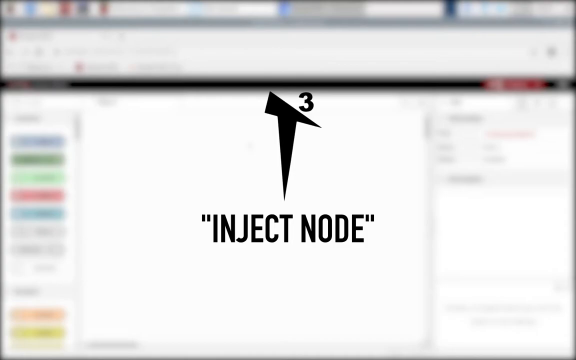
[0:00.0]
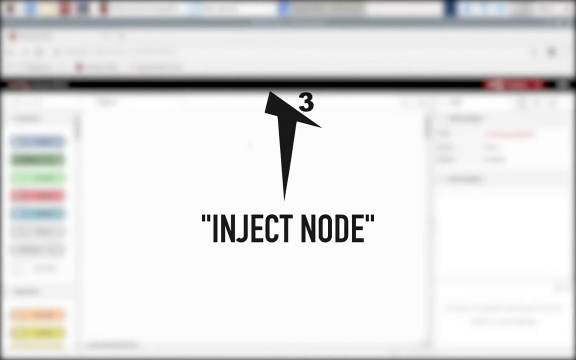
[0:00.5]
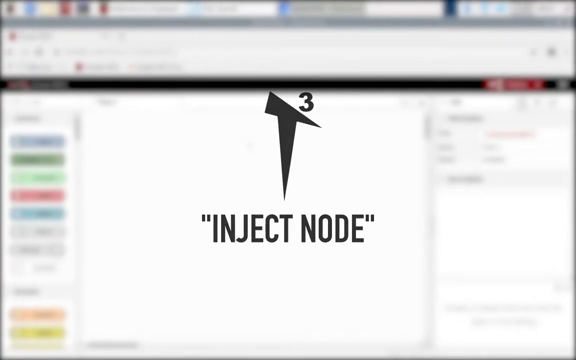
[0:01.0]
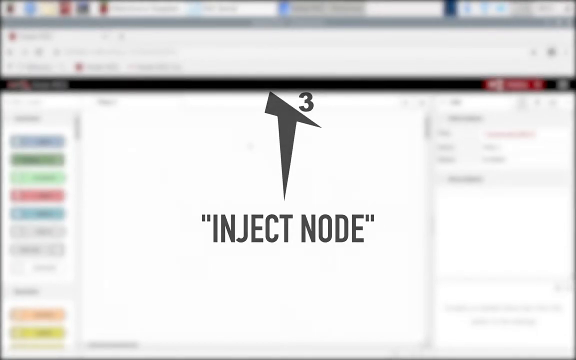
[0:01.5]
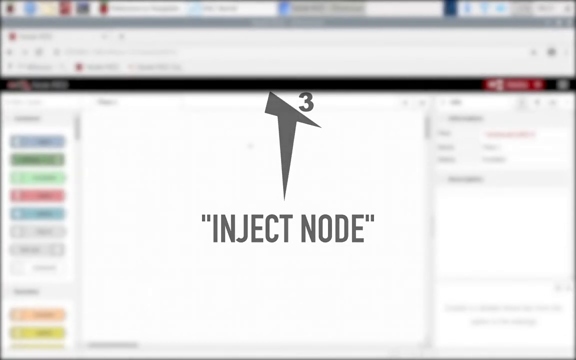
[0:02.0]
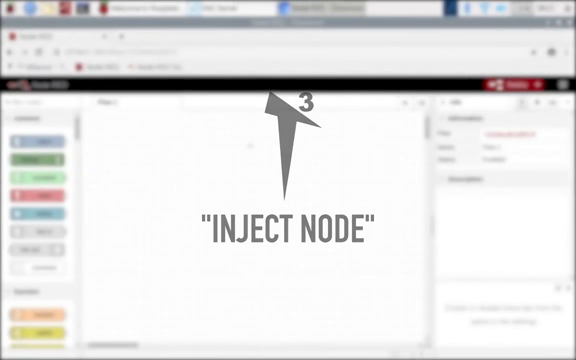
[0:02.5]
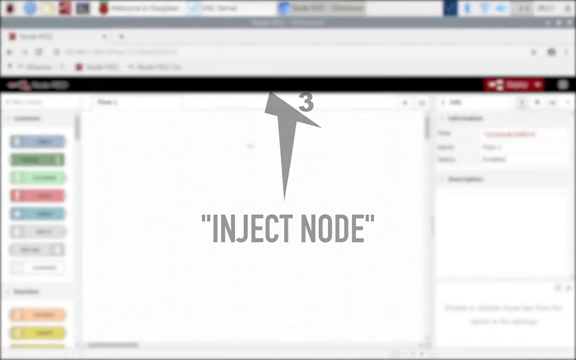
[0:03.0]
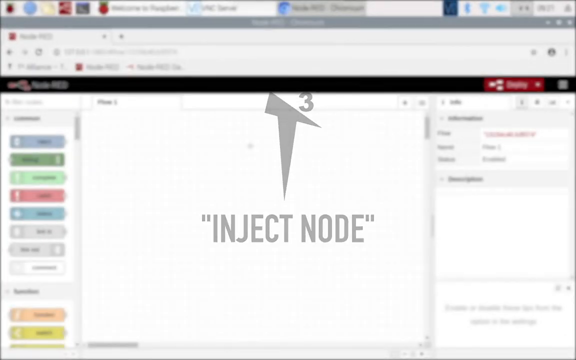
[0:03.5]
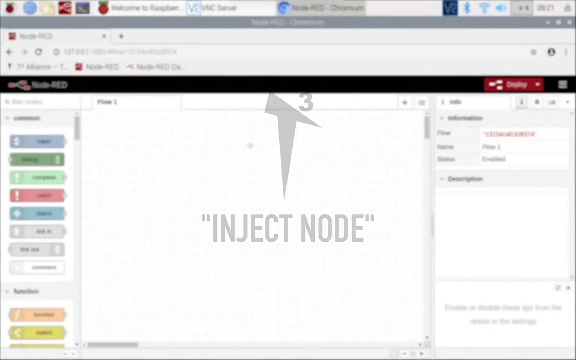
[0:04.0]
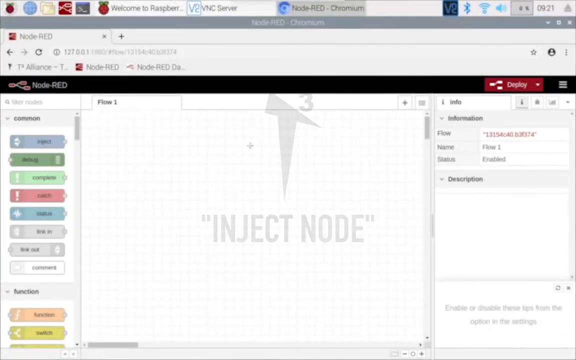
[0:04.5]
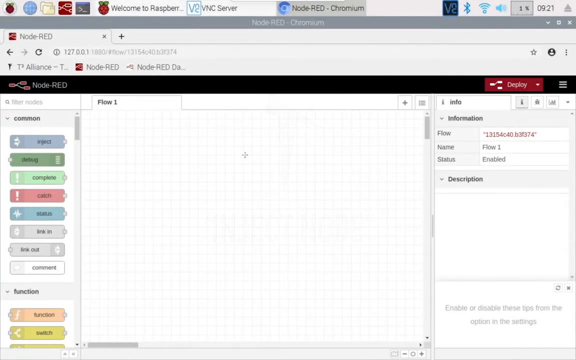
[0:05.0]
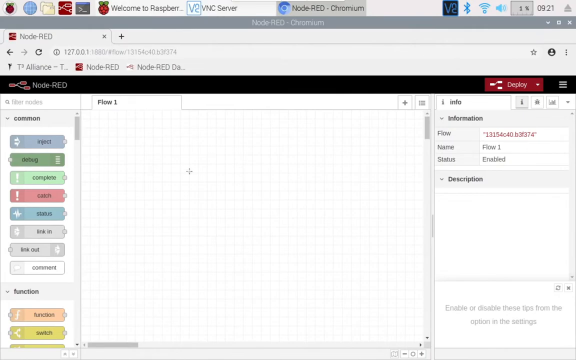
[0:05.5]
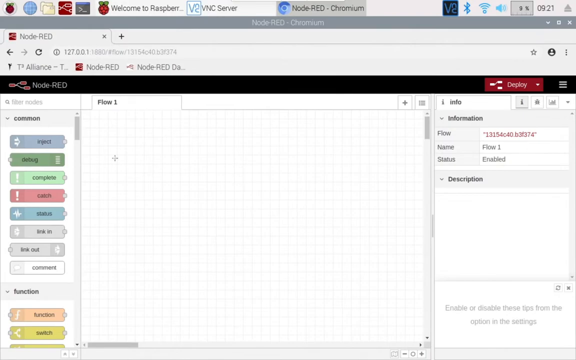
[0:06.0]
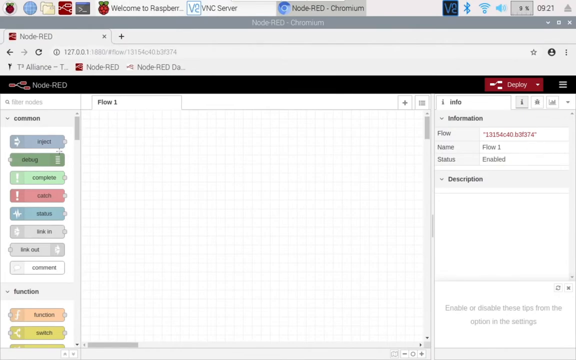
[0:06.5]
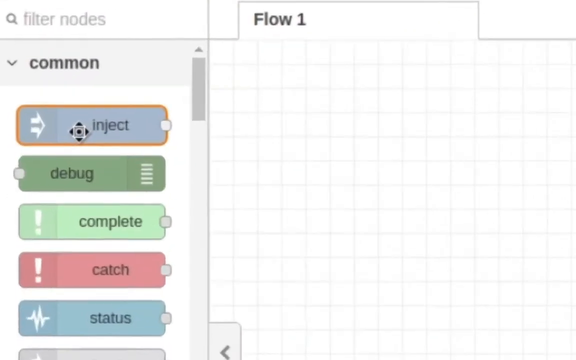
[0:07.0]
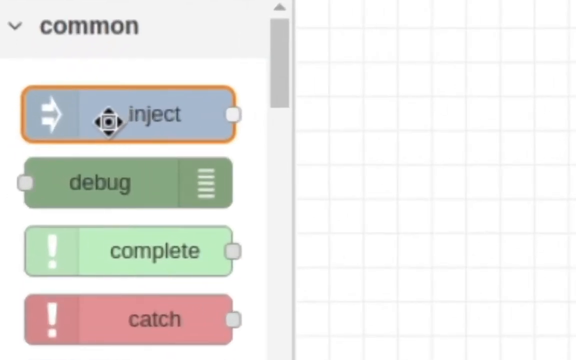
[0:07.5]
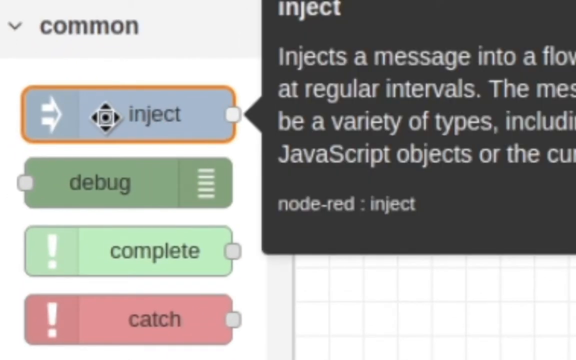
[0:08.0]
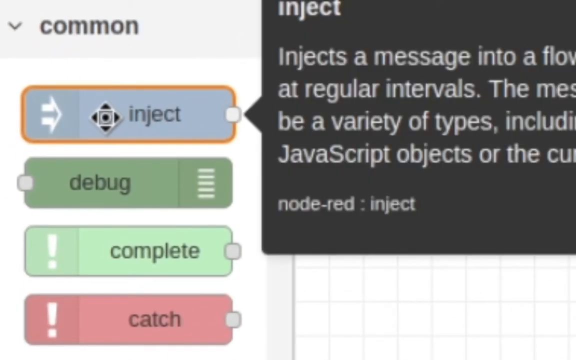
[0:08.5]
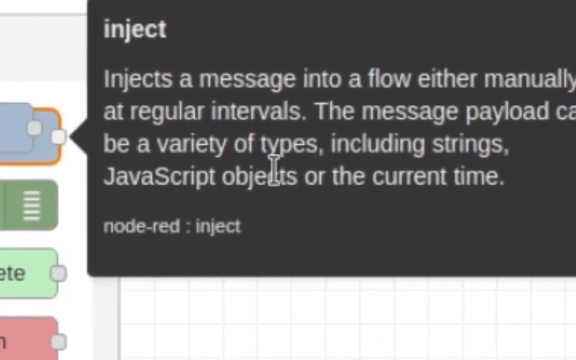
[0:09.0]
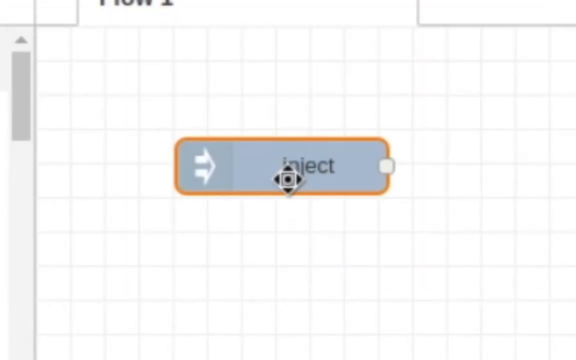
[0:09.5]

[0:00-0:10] The words "inject node" are written on the screen, and the video gives instructions on how to use the Excel document being used on the inject node, as well as how to use the form. Words are written on the video, and it is a tutorial on how to use the Excel document.